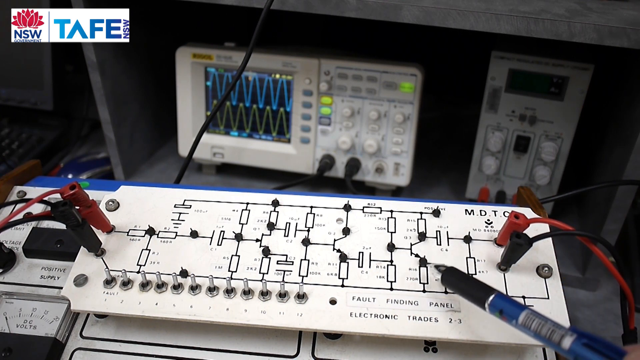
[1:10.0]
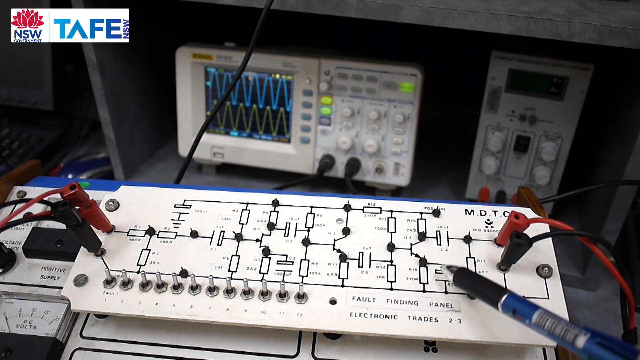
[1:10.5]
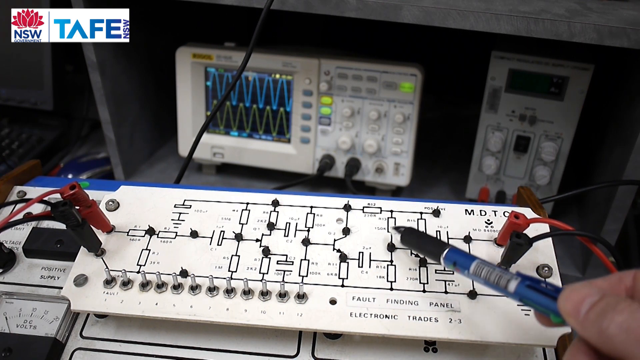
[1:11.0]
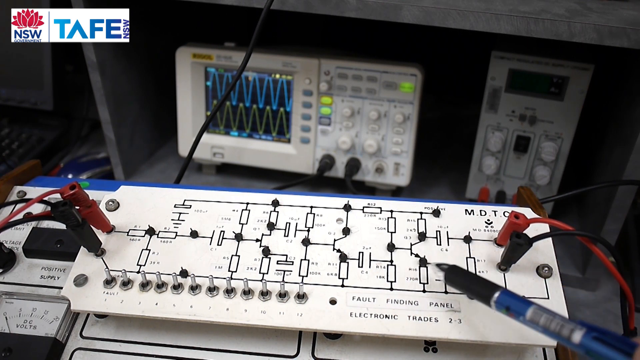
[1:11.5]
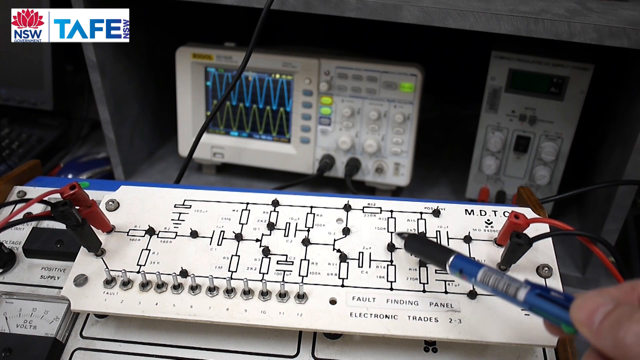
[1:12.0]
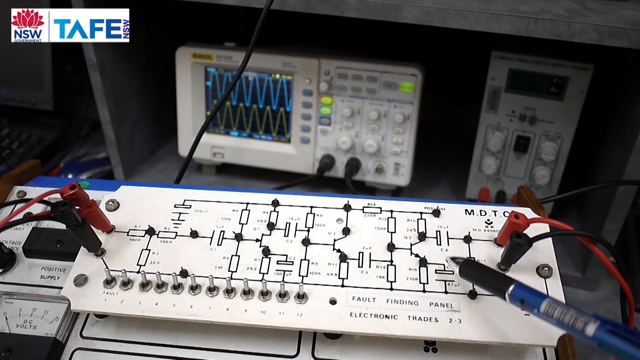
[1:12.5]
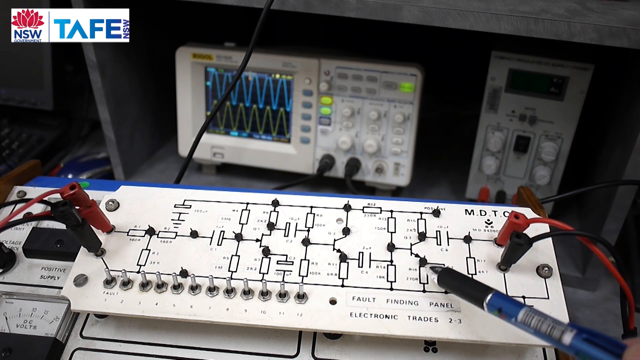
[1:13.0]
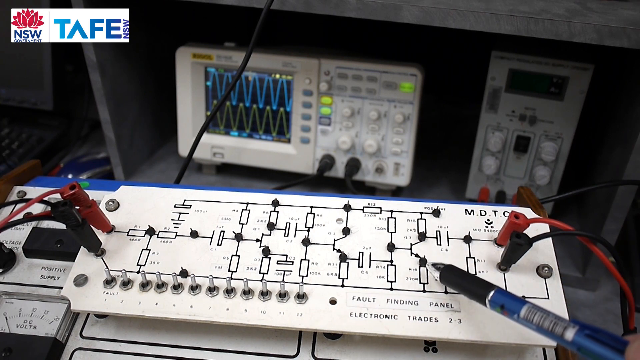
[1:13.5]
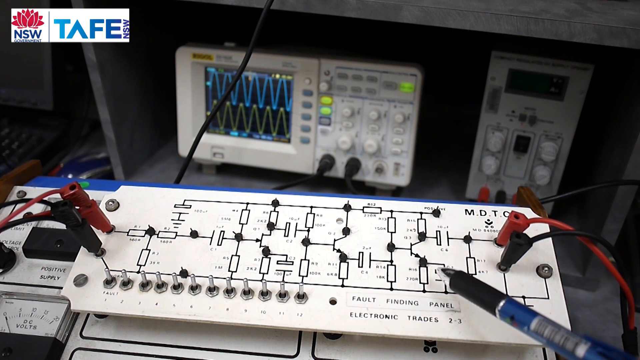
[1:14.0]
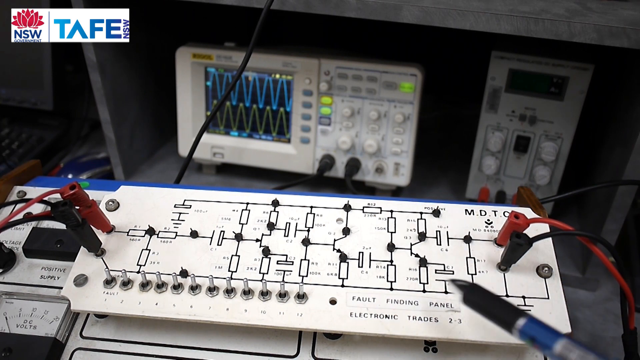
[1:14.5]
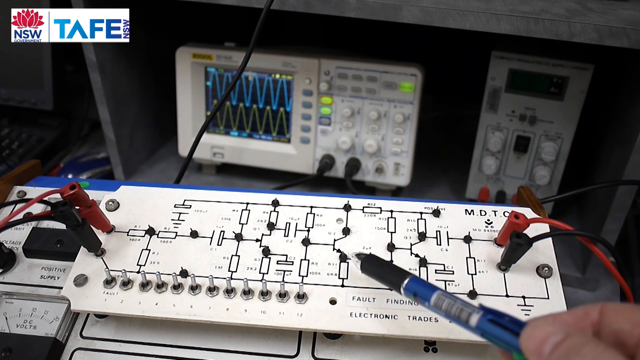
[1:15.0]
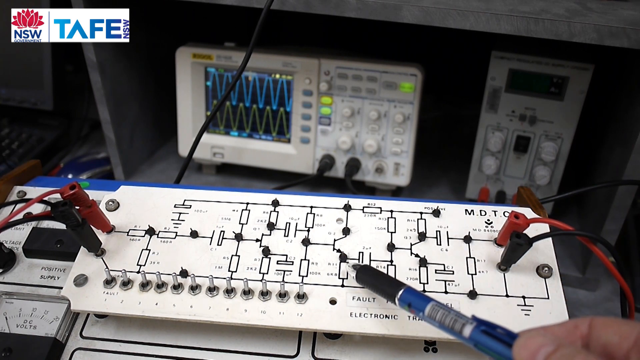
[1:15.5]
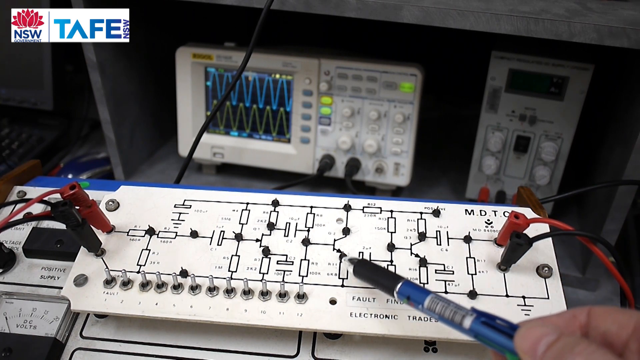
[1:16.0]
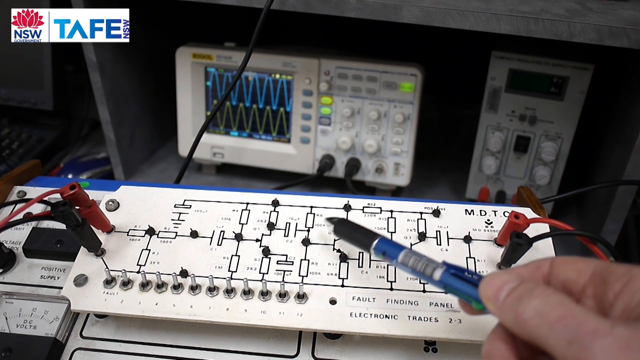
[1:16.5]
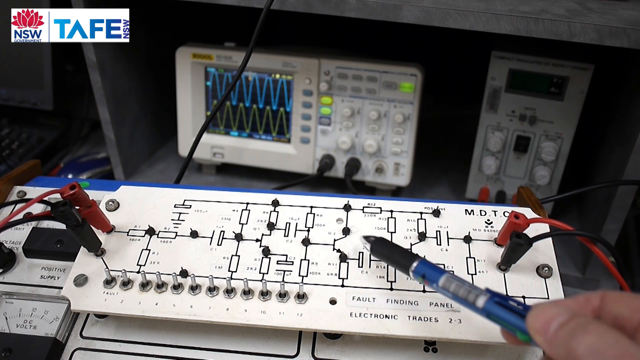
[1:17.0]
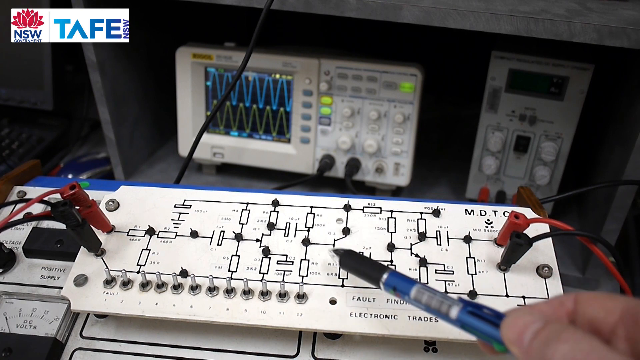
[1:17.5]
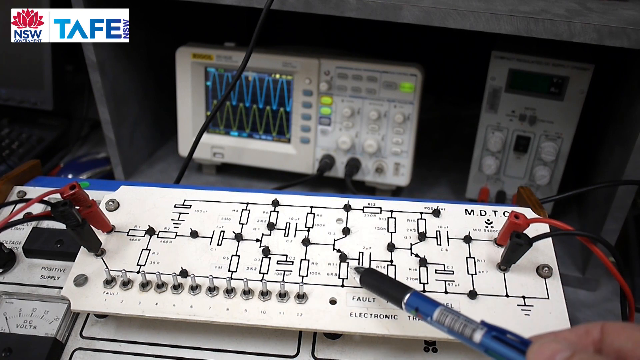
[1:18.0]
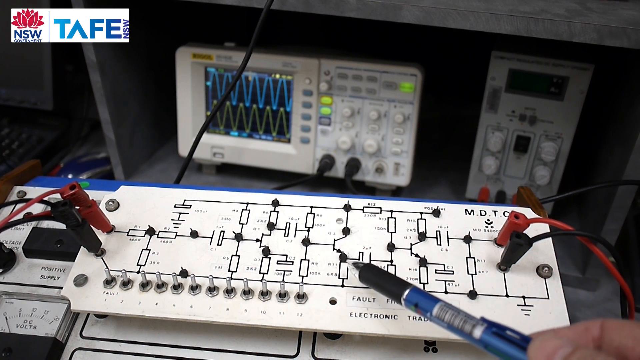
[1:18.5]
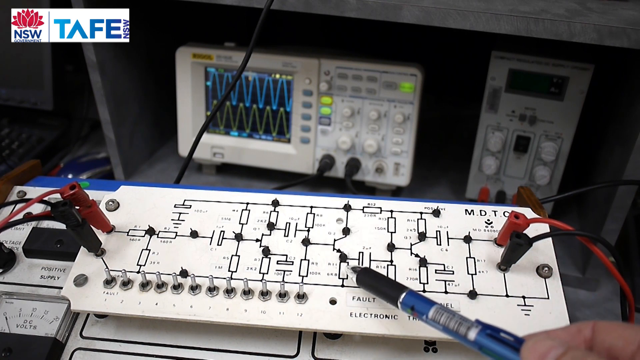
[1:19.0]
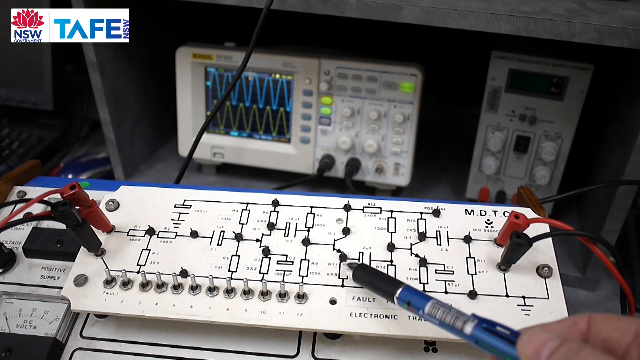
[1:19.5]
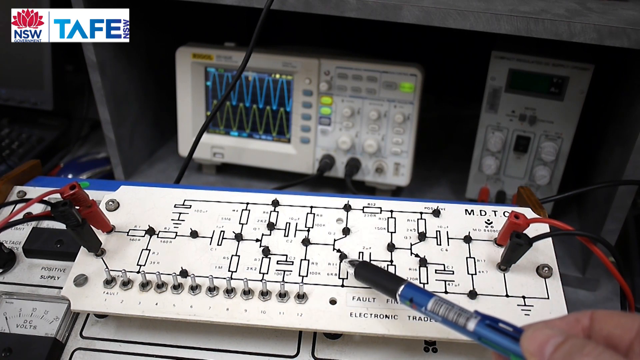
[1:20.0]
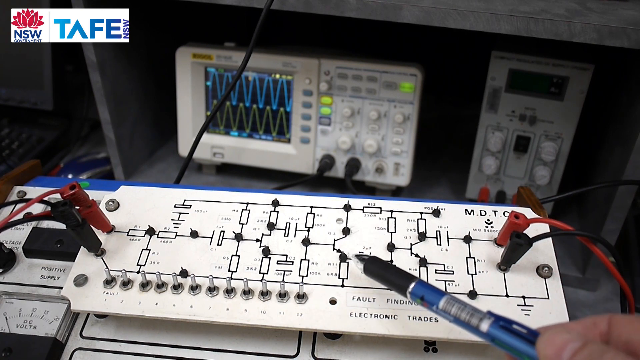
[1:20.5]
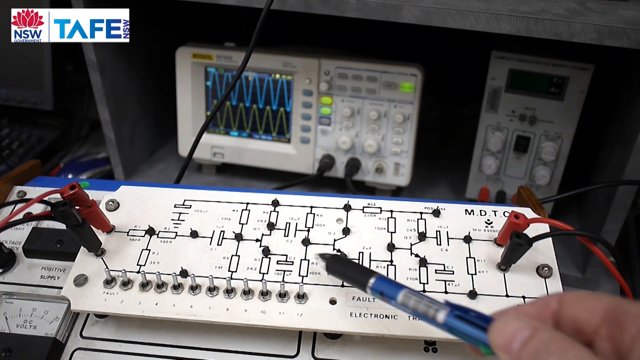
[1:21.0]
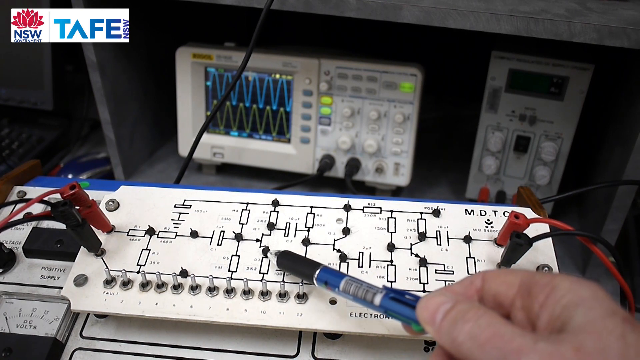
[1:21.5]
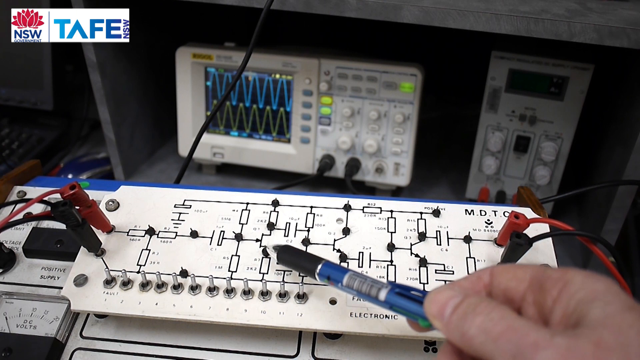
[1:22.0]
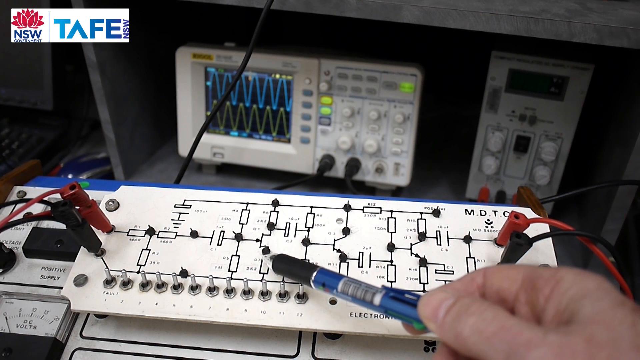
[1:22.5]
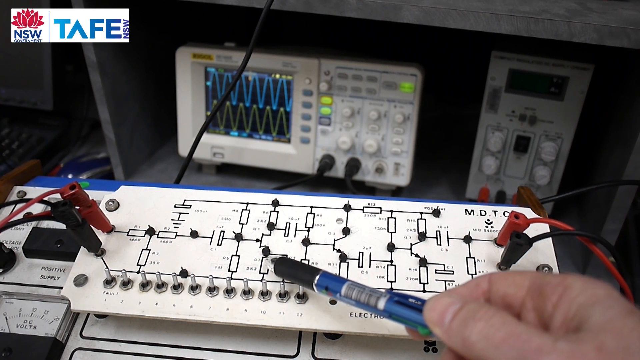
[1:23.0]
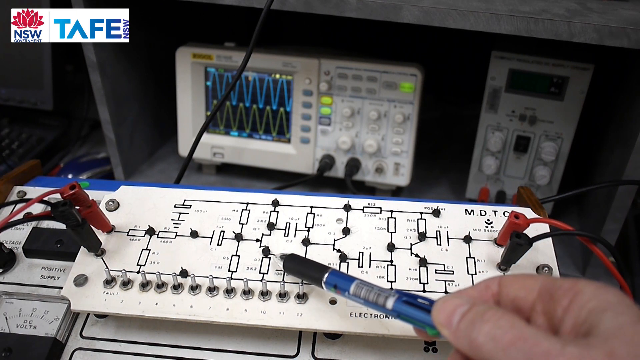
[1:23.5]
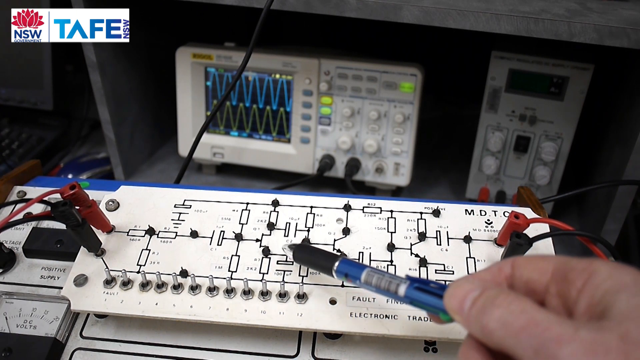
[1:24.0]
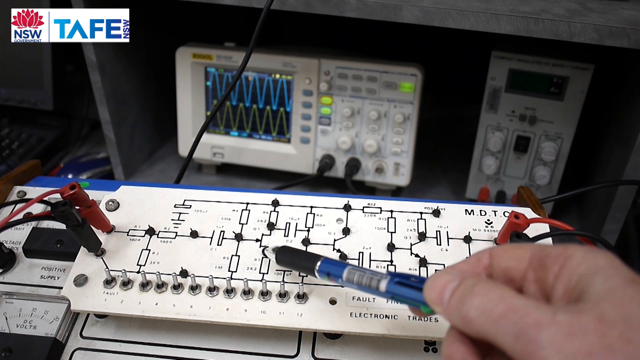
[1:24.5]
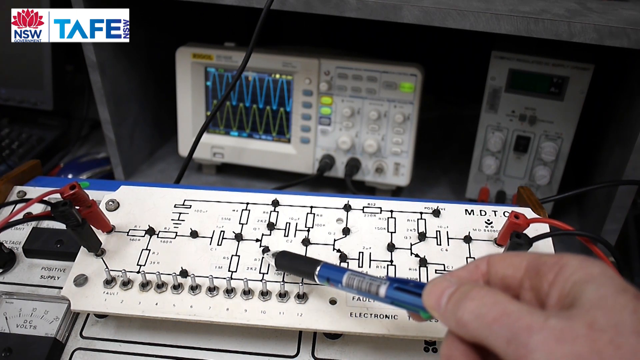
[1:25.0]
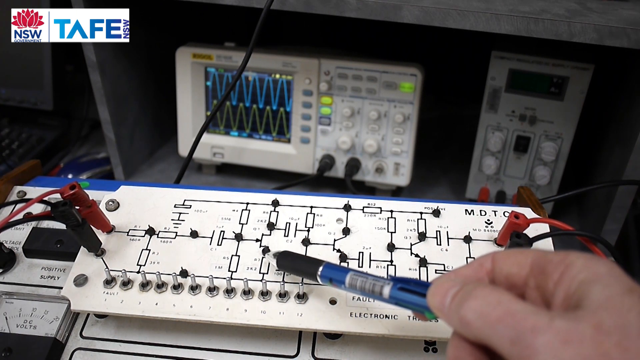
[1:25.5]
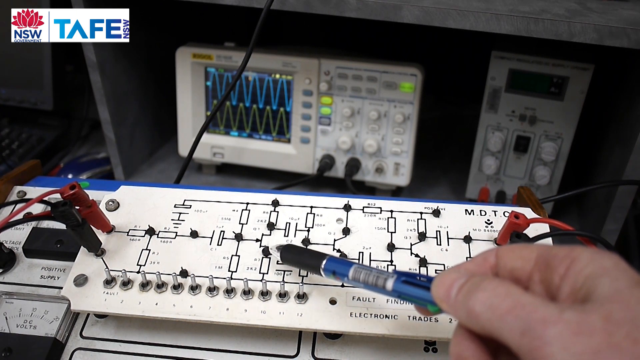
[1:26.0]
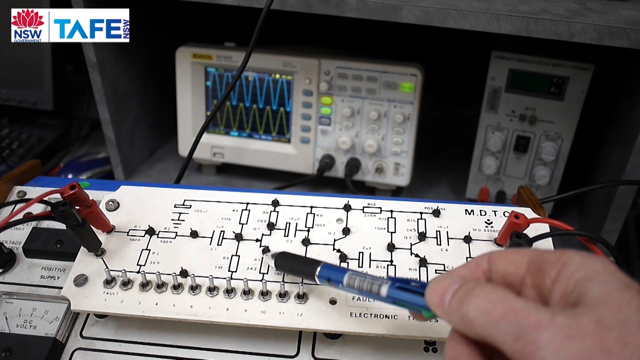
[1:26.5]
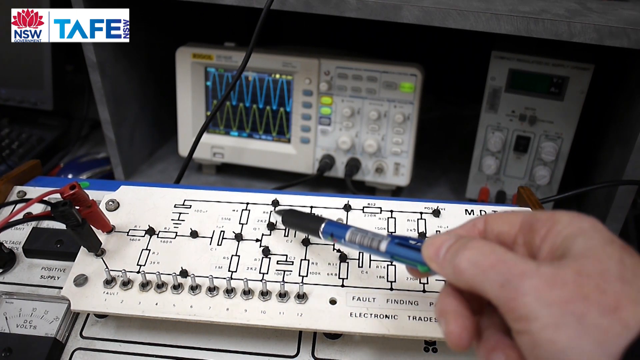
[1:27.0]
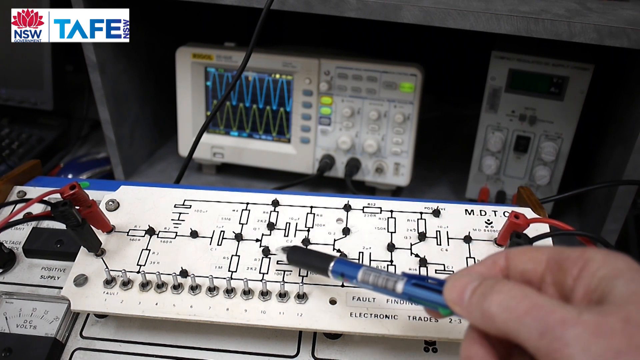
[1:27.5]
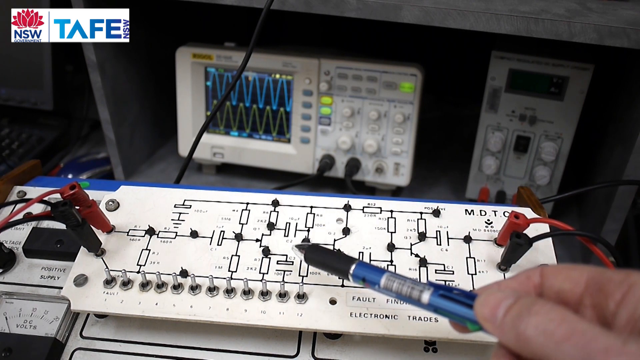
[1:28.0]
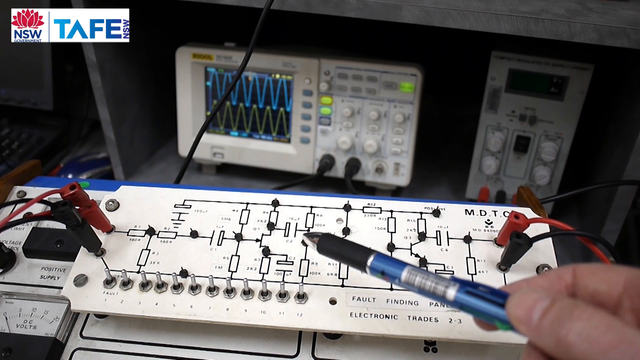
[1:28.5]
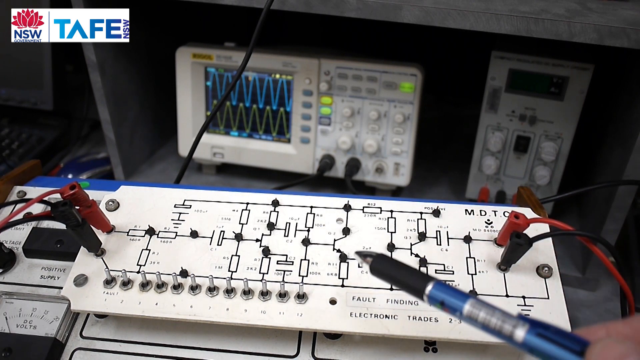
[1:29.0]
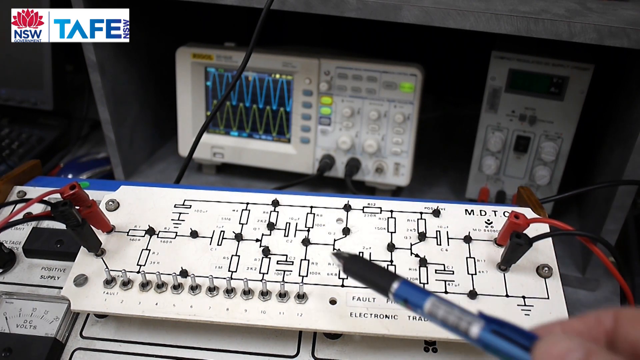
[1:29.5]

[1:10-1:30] The panel remains visible. To the left of it are what look like two screws, one at the top and one at the bottom. Off to the side, another small piece comes out from the panel with a little black box, possibly with the word "positive" under it, then the edge of another knob at the end and a few more screws. At the very top left of the screen are the letters N-S-W with a red lotus-looking flower in a white rectangular box, then a vertical separating line, and then in blue letters a T, what looks like an upside-down V, then F-E, and after the E, running vertically, the letters N-S-W. The person continues using the pen point as a pointer to show different things. As they point to a couple of the dots, the pen point moves in a circular motion, as if indicating a connection between some of the items.